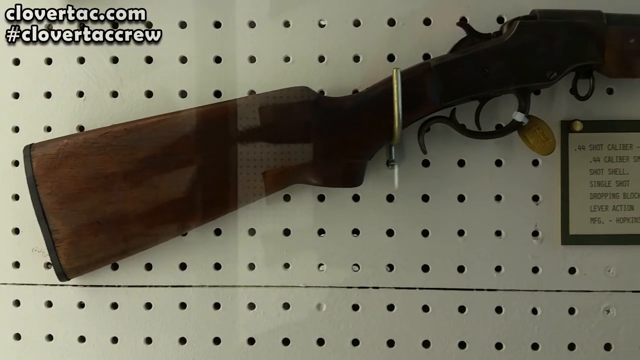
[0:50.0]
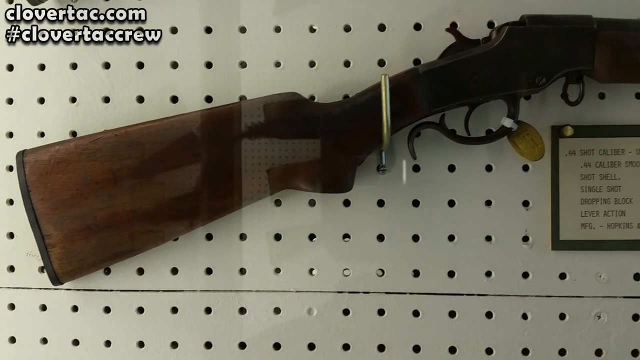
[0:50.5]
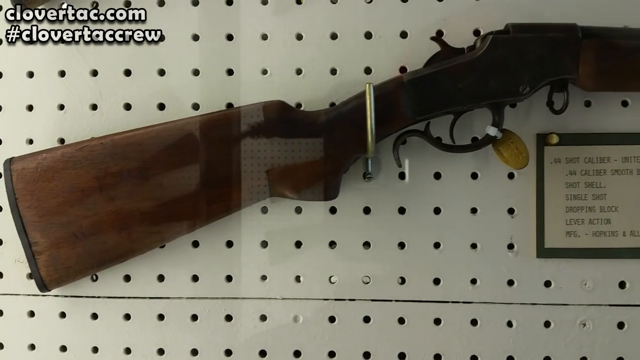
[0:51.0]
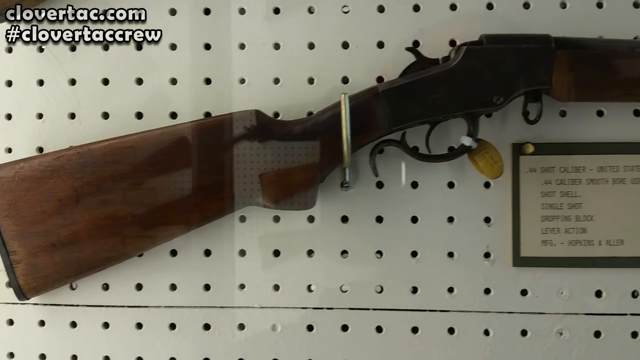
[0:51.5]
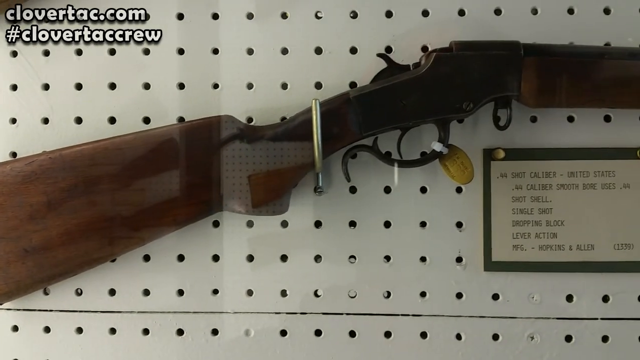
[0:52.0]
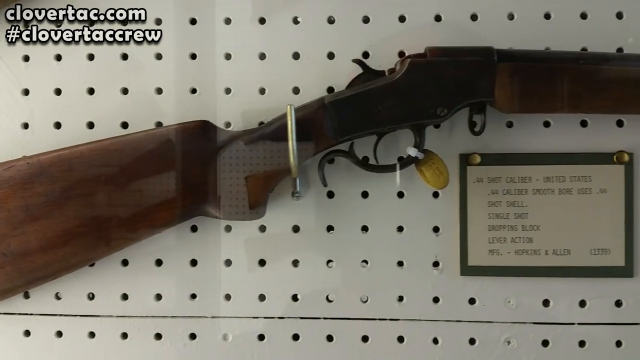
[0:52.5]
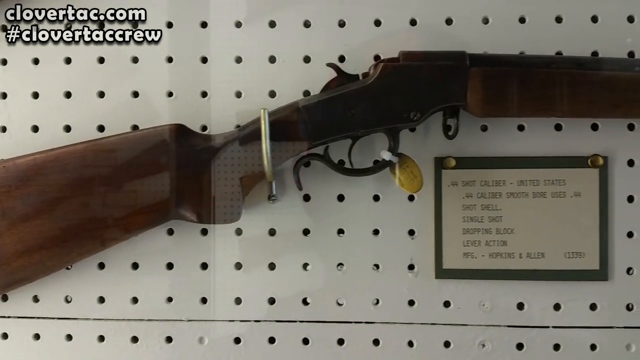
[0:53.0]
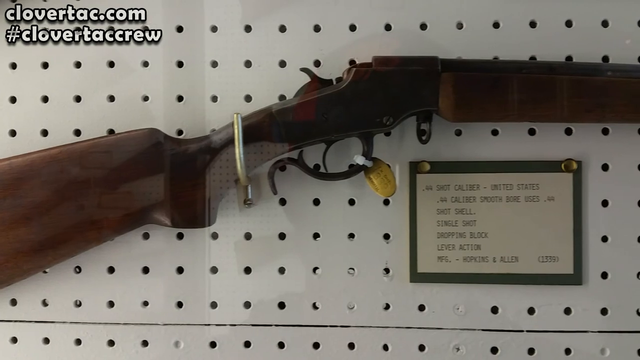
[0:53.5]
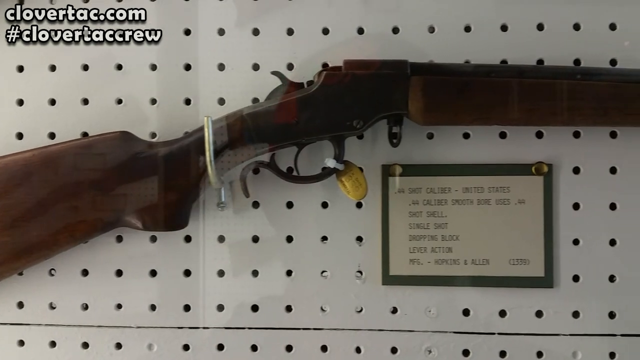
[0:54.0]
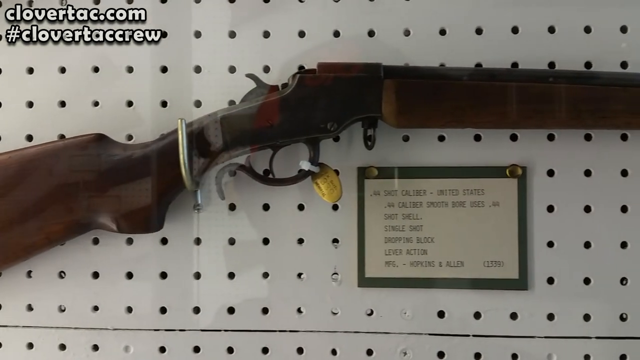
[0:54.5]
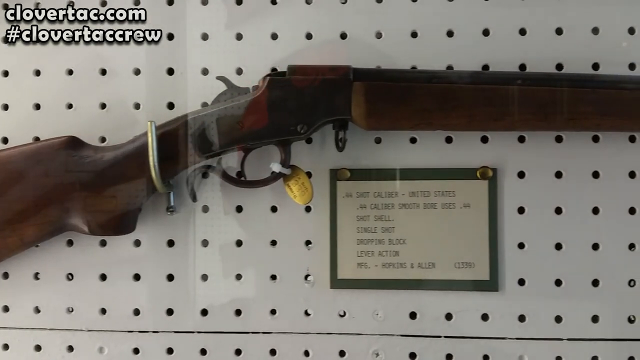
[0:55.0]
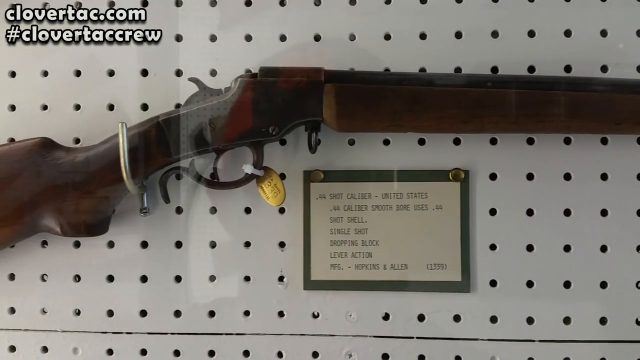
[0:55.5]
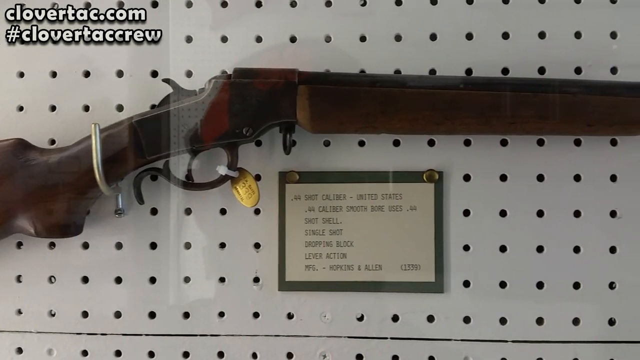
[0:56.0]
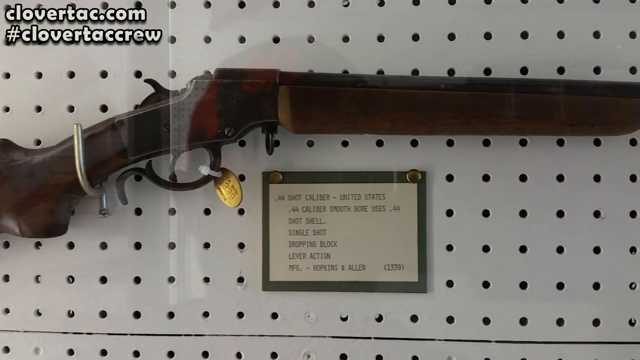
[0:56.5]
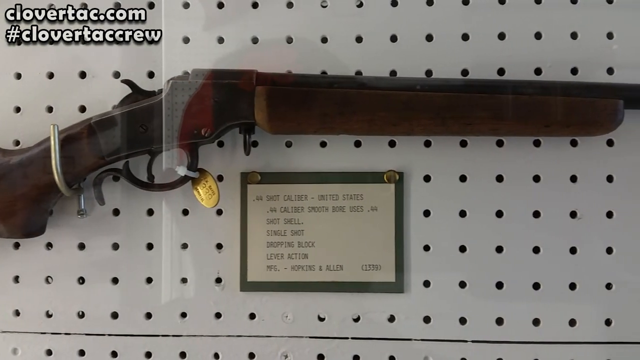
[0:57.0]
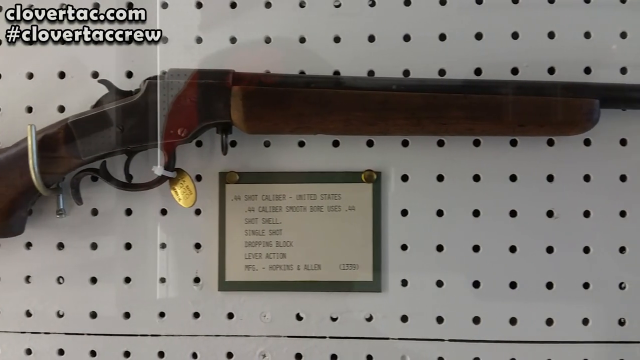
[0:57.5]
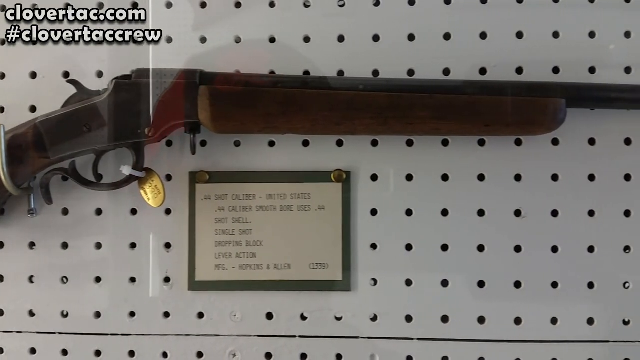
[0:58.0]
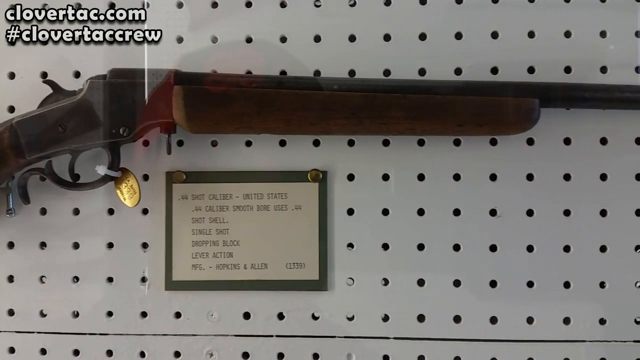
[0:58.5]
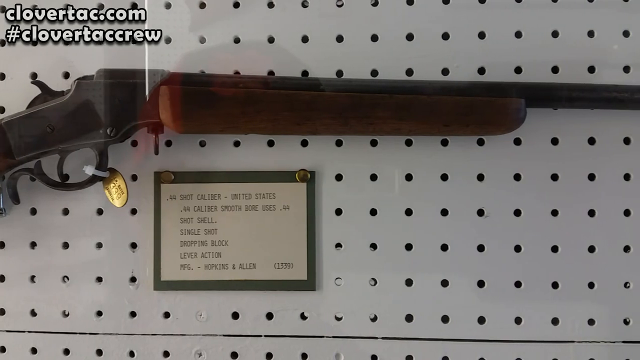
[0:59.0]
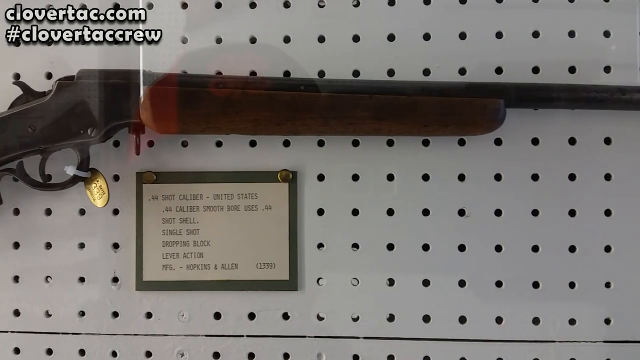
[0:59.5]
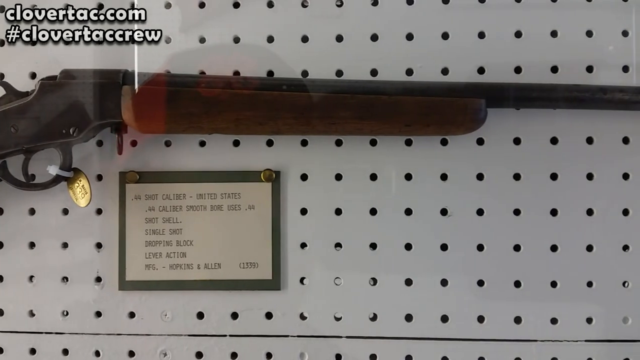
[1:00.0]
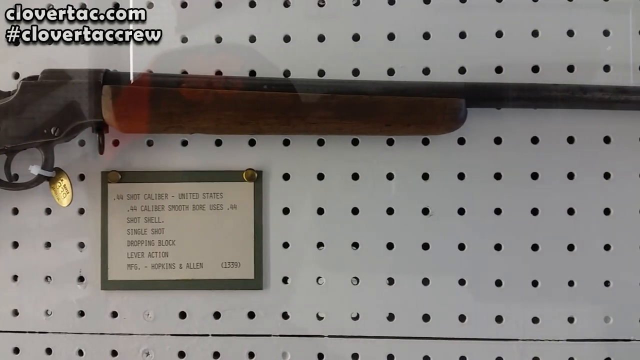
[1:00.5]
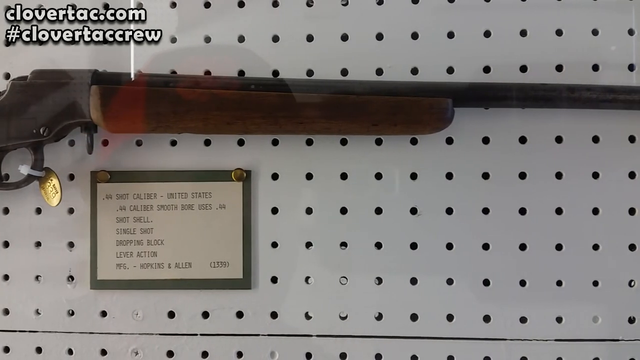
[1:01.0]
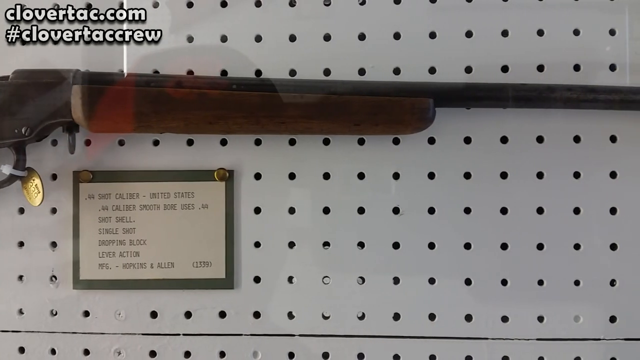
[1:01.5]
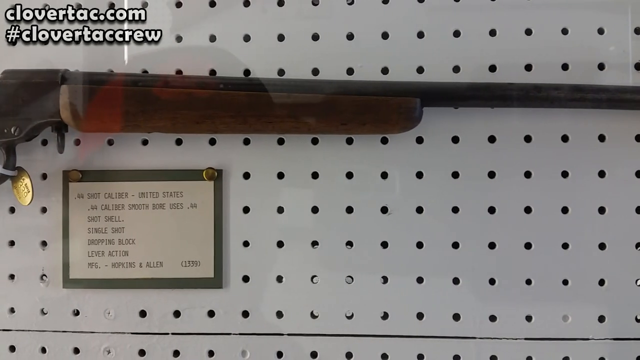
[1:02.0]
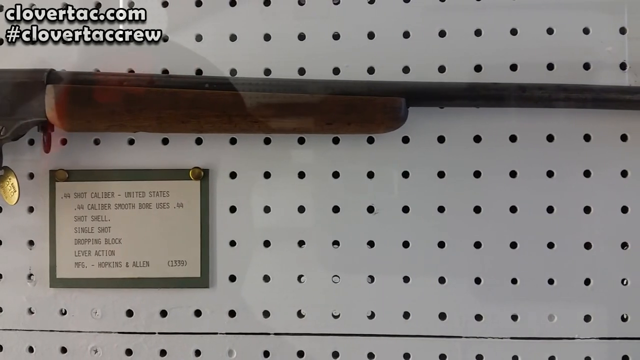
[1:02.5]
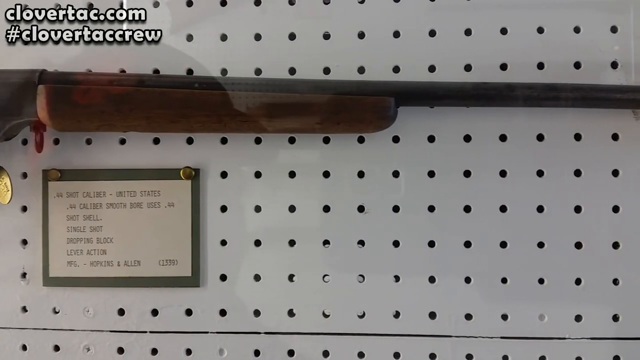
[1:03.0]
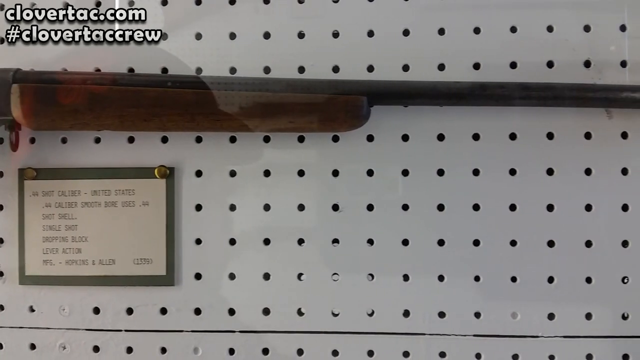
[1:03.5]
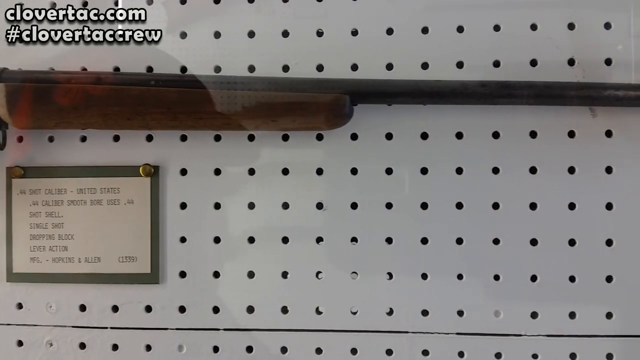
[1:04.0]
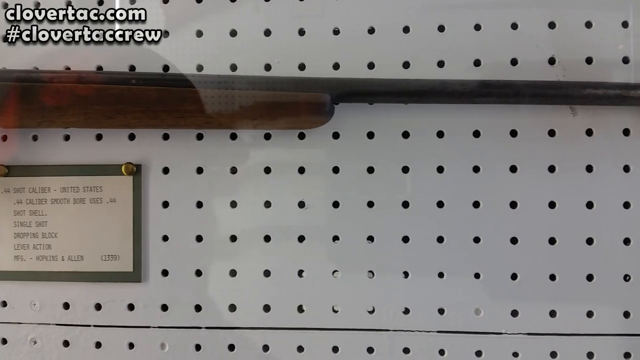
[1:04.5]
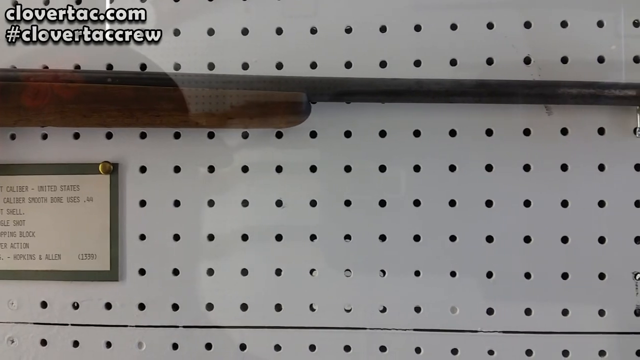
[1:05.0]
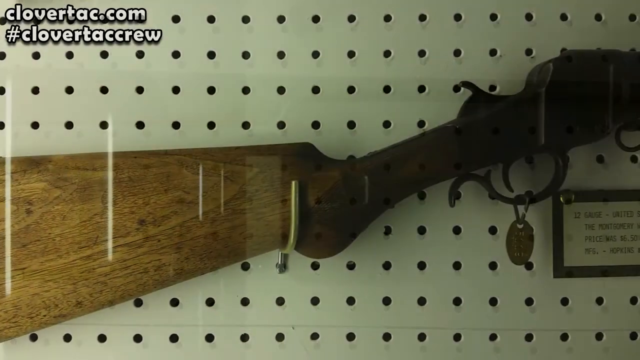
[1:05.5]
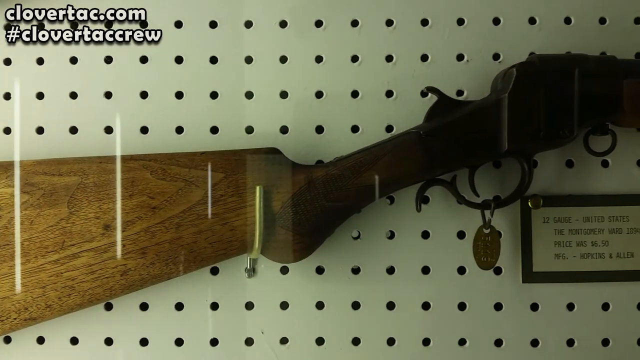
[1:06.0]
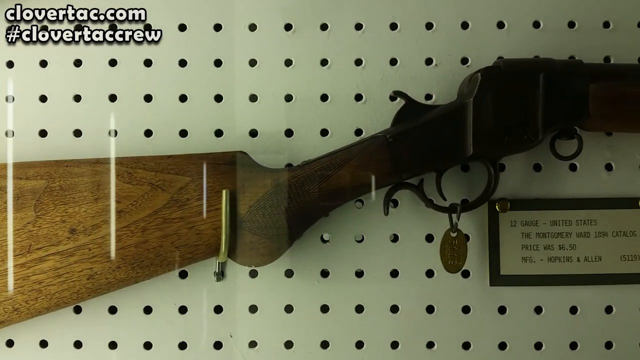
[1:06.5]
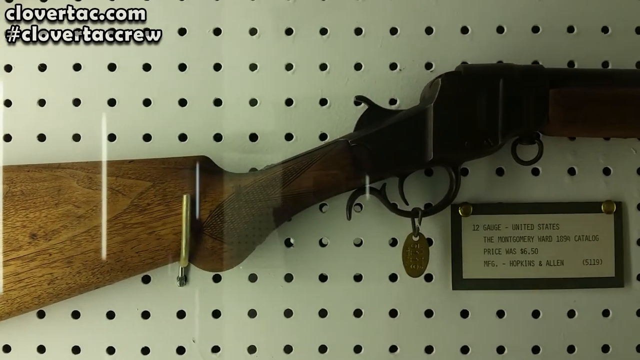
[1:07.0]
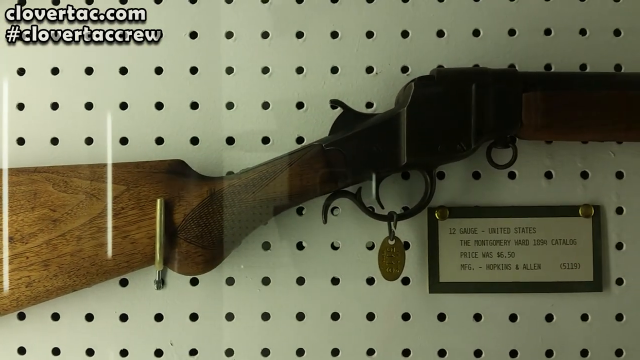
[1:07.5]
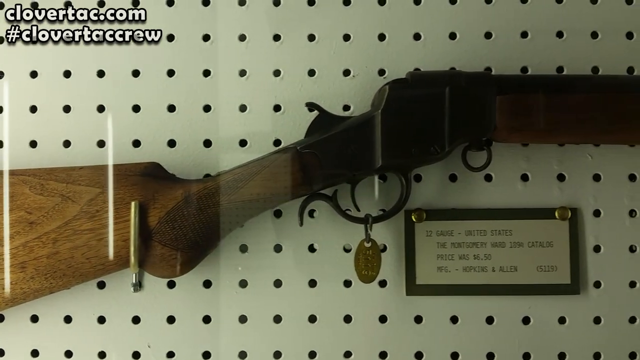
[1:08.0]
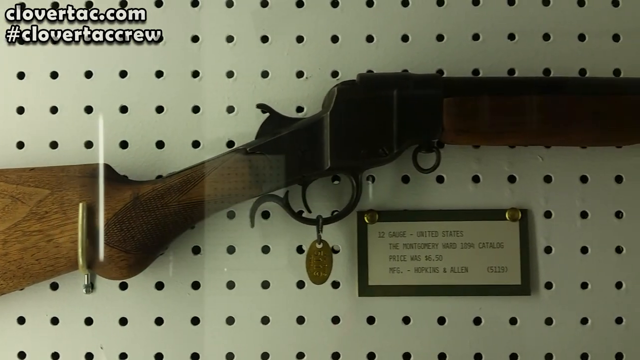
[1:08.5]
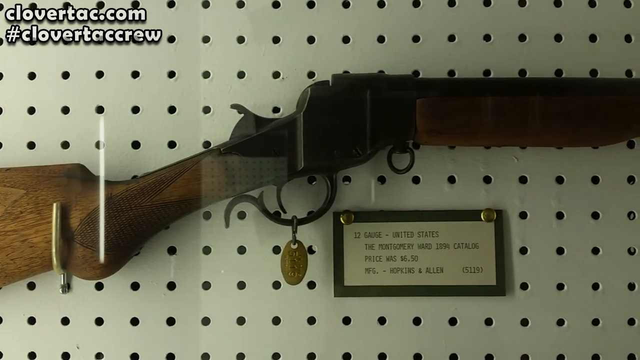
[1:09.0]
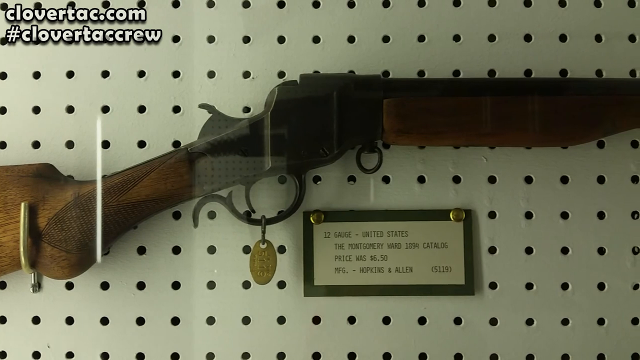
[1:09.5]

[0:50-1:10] The back end of a shotgun hanging up on a wall is shown. It looks like part of a museum, possibly behind glass, as the video has a somewhat glossy texture. Underneath the shotgun is a sign, a post-it card with a green outer border. The camera slowly travels to the right, bringing the whole shotgun into frame little by little as it hangs on a white wall covered in many small black circles in vertical rows about an inch apart. The next weapon is another shotgun similar to the previous two; its back end appears first, and the camera slowly rotates to the right but stops halfway along the gun.